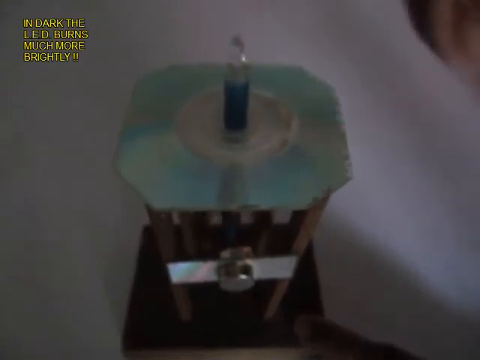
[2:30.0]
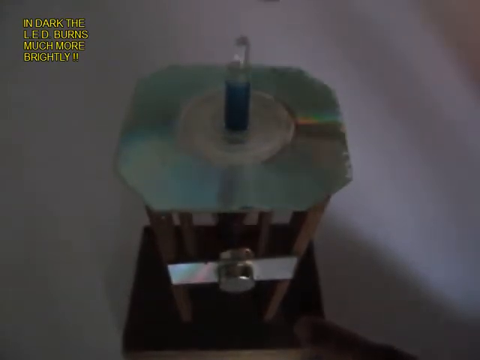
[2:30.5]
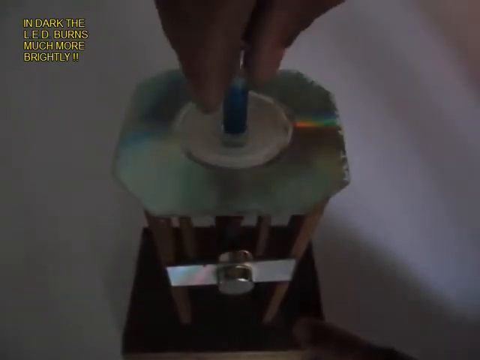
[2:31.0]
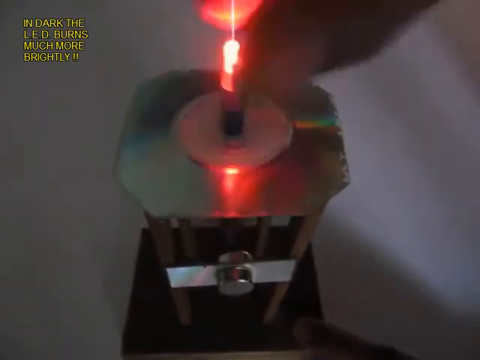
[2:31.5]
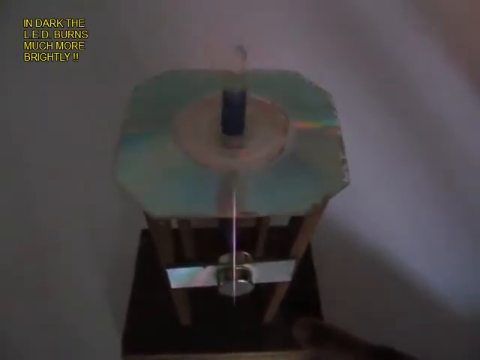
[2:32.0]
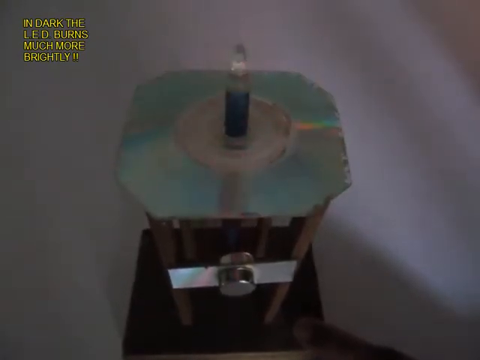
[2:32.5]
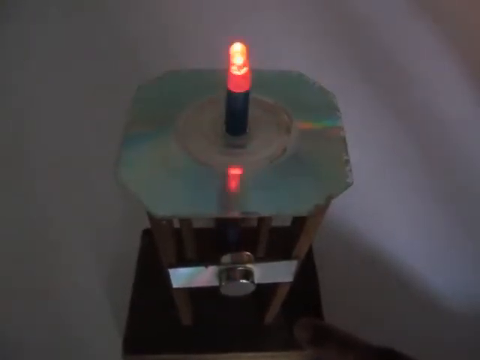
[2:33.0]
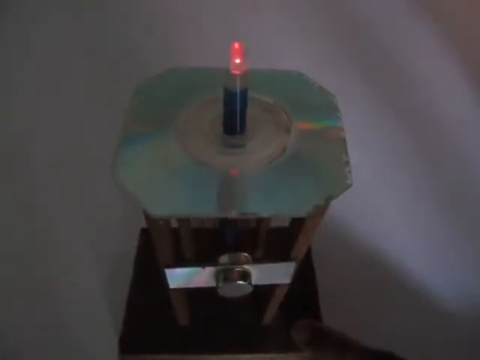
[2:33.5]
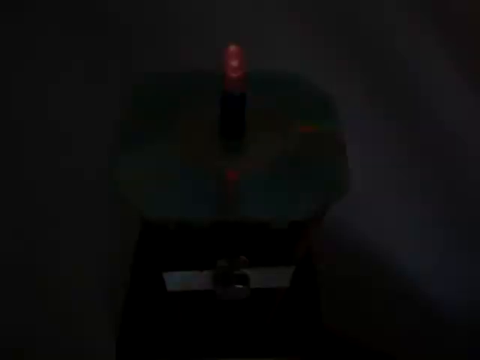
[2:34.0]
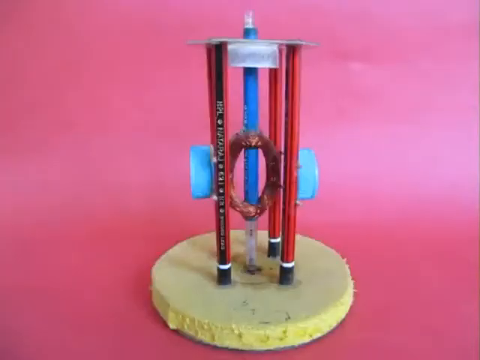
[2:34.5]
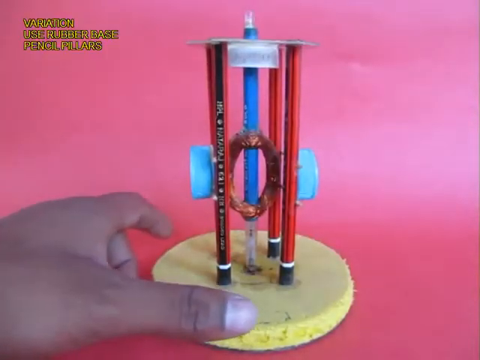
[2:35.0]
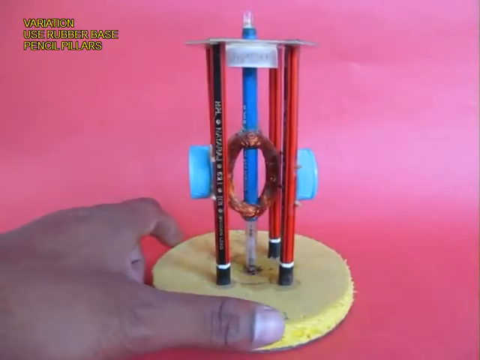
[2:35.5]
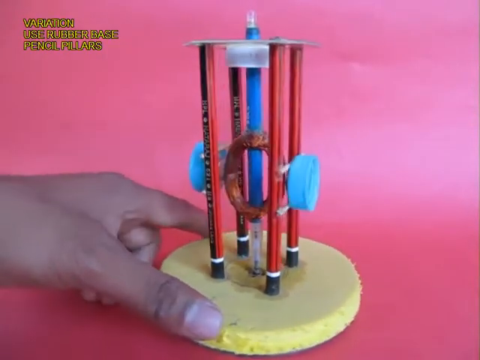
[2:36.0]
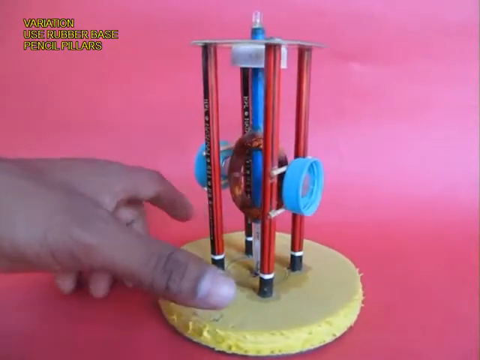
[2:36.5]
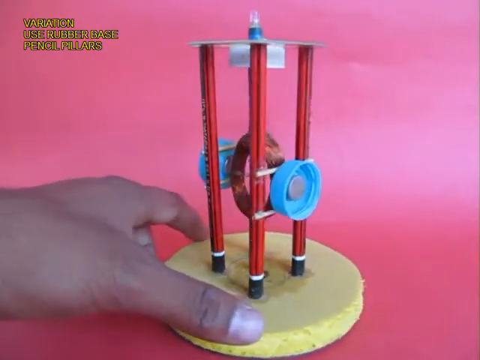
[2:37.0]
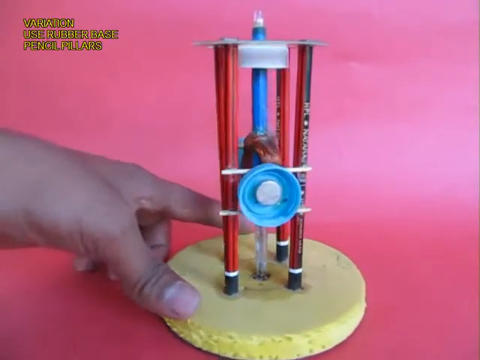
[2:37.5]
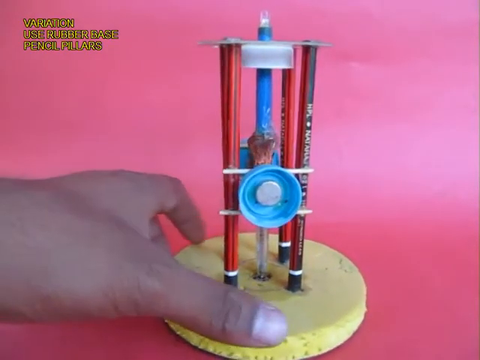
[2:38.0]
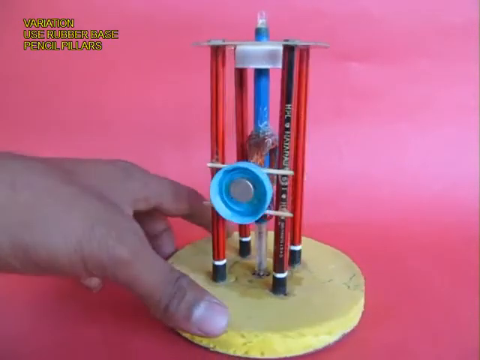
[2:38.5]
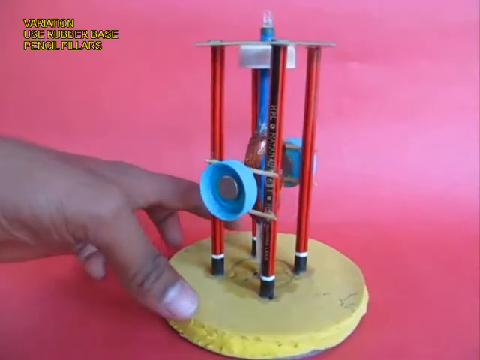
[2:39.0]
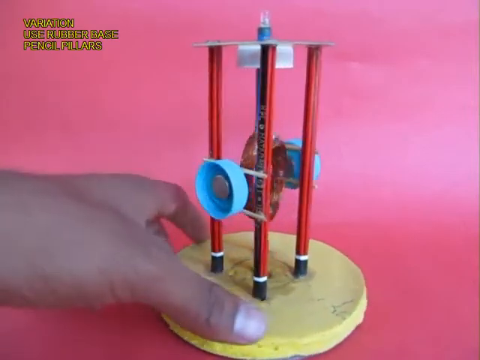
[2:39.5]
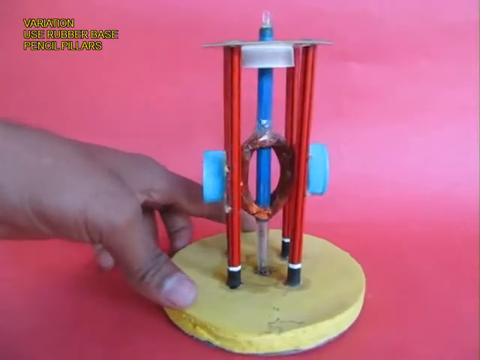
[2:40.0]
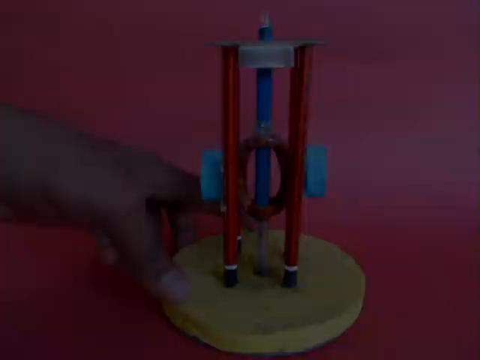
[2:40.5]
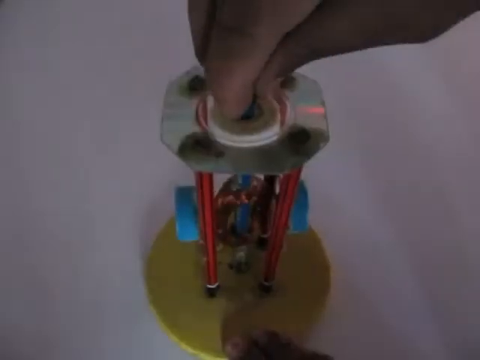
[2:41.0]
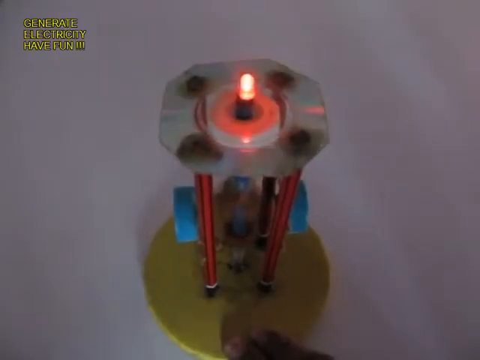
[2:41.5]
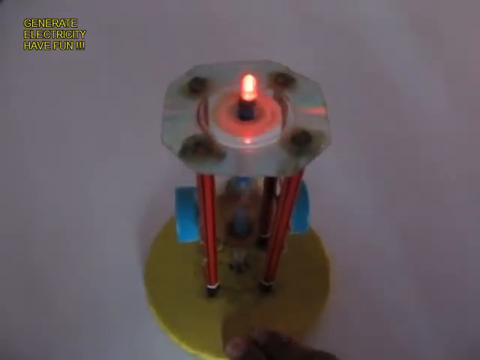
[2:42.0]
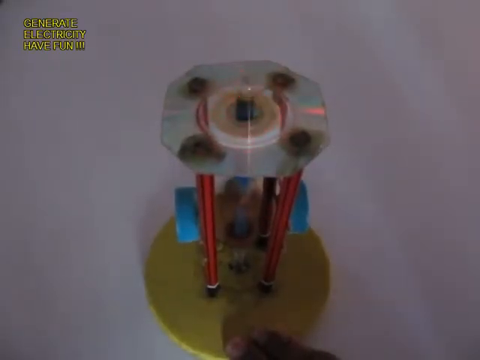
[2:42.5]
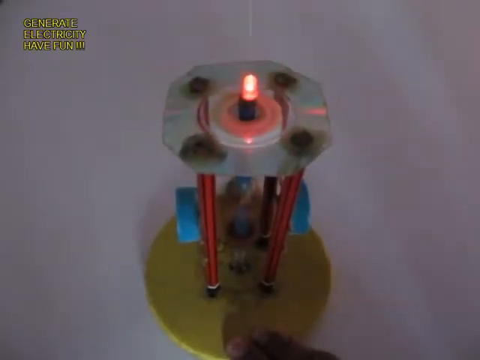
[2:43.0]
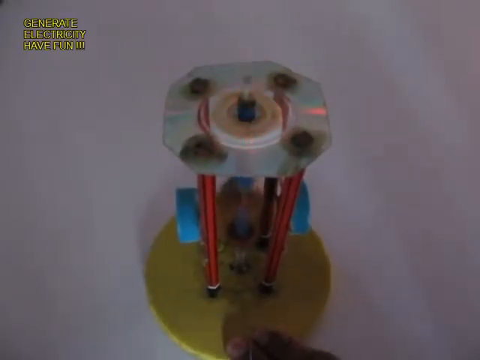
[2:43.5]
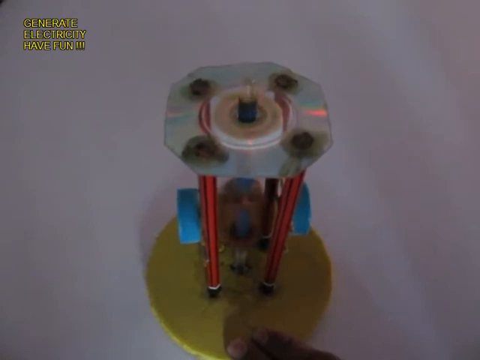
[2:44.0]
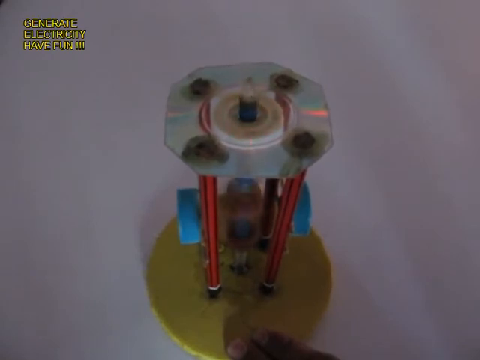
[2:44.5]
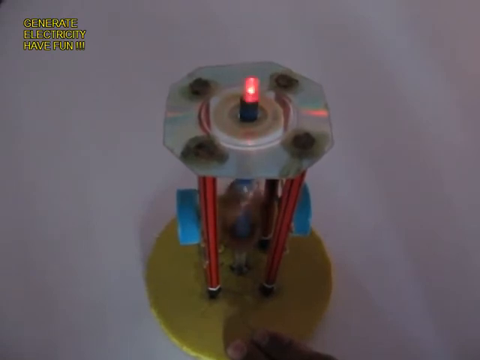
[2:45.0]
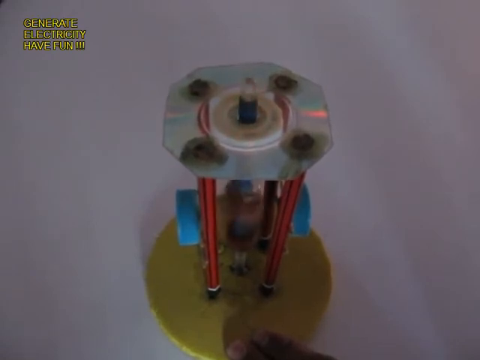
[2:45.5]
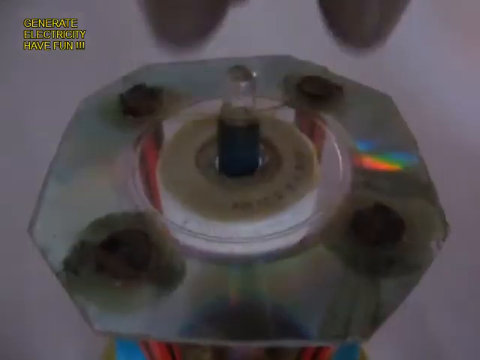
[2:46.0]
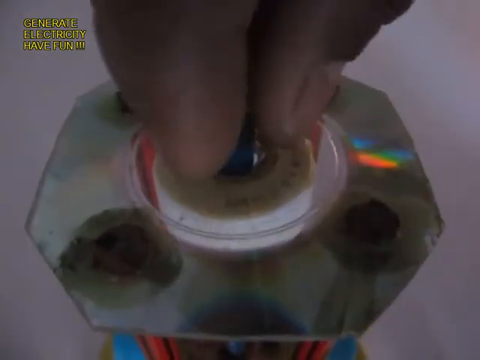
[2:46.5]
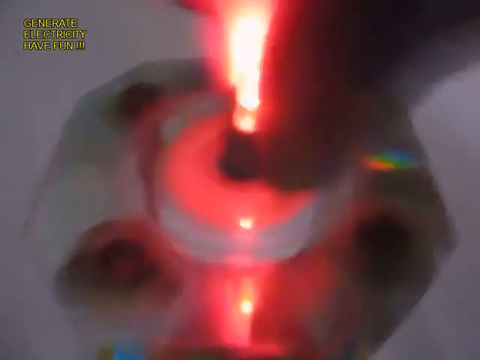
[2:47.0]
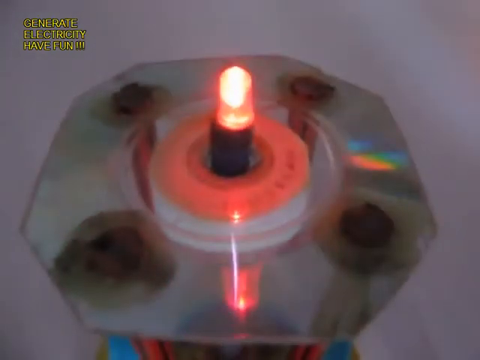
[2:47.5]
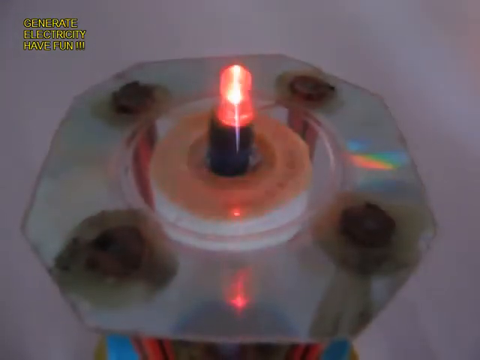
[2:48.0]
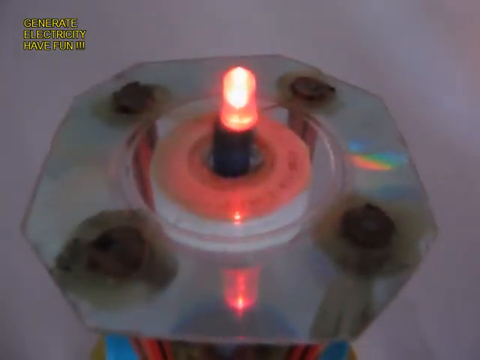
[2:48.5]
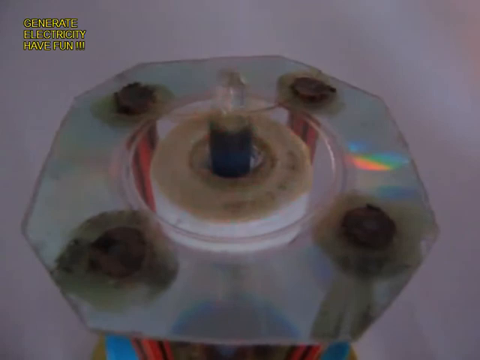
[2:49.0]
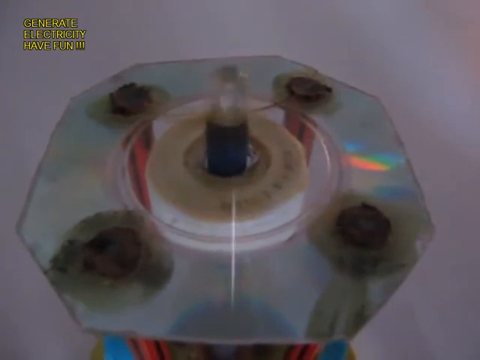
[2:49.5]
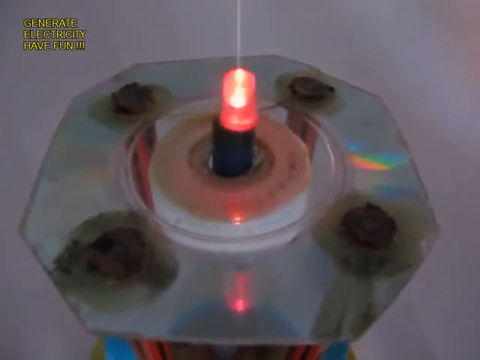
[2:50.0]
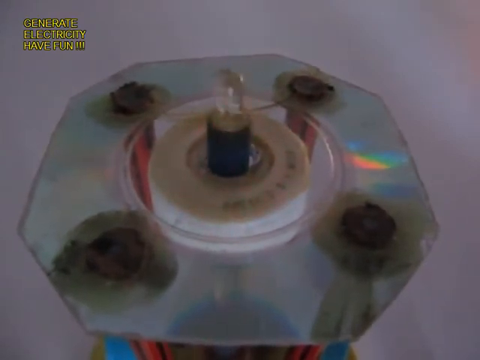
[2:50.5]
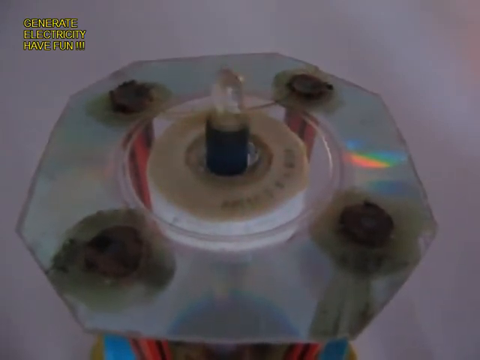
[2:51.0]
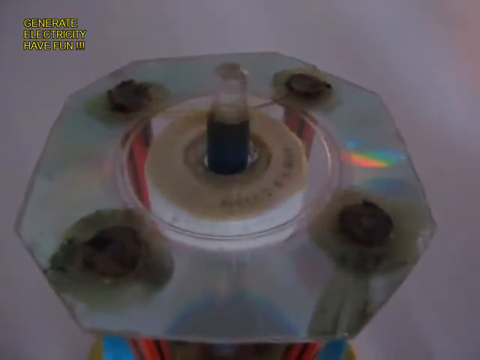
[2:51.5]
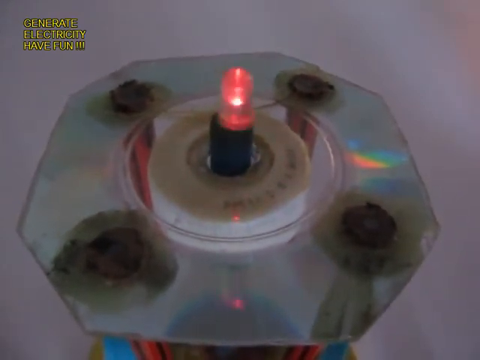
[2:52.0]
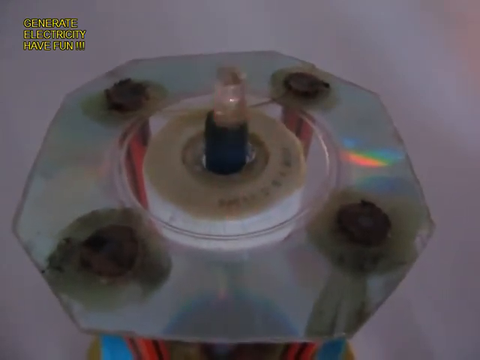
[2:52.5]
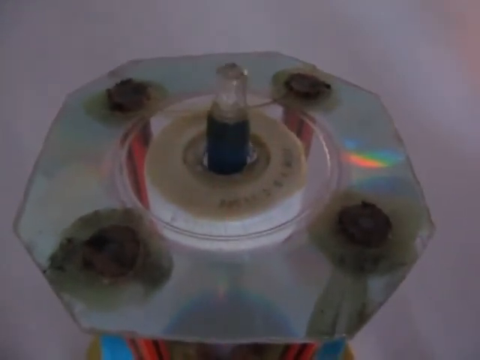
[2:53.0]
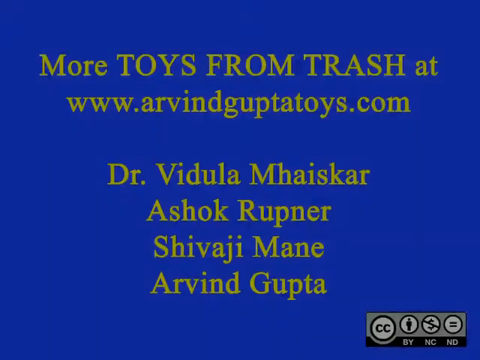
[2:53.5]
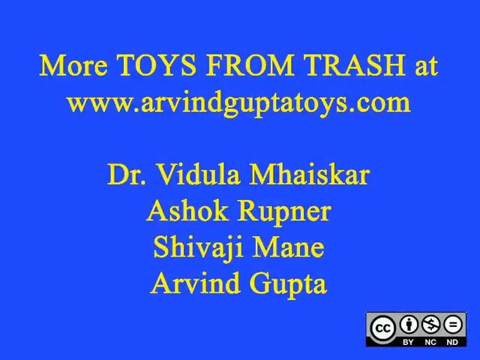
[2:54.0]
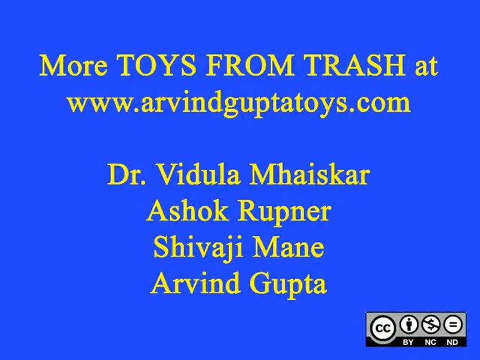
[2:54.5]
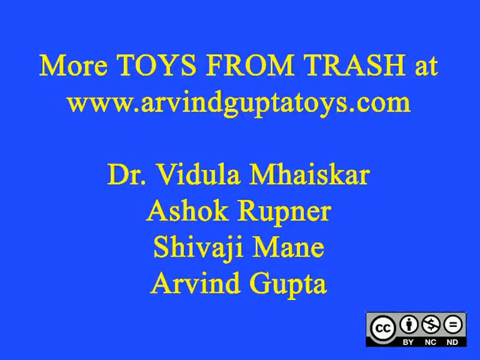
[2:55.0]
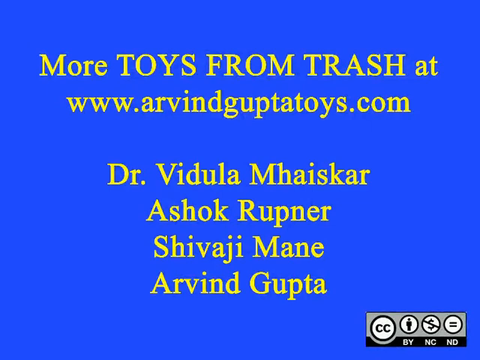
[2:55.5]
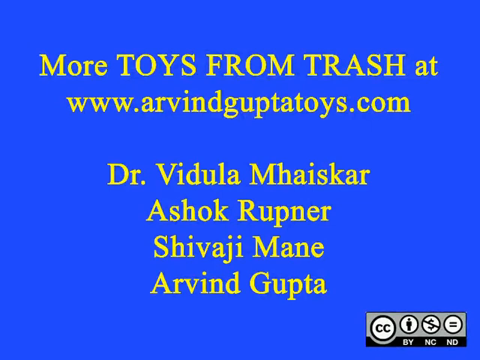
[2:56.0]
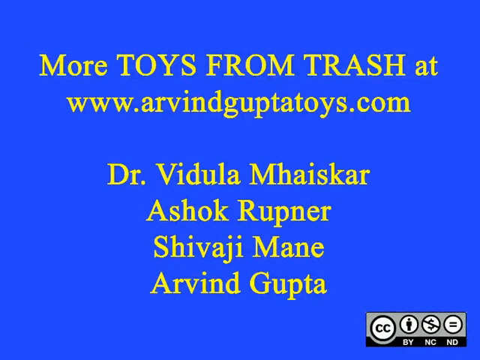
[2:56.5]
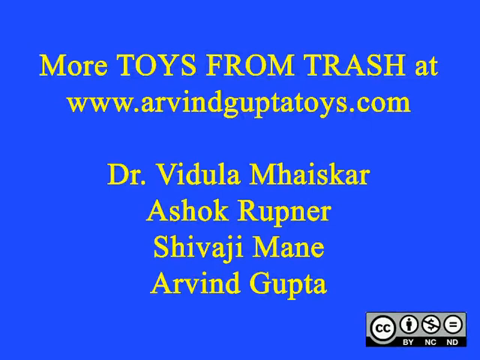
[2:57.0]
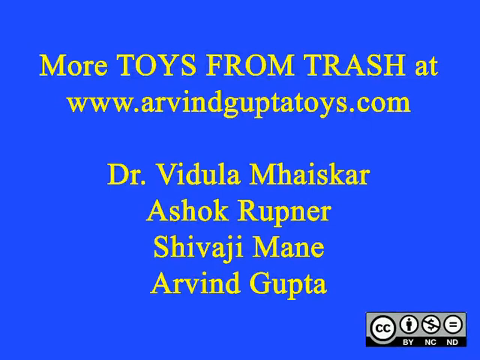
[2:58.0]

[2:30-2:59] The ball pen keeps spinning as the right hand comes into frame twisting its top so it continues to spin very fast, while the LED light blinks red as it spins clockwise. The scene returns to the red table, showing a similar variation of the wooden stand that has a rubber base and pencils as pillars instead of wooden pillars; the left hand turns it clockwise to show the whole structure. It then appears in the dark on a white table, where the LED light turns on; the pencil twists and spins fast as the LED light flashes red. In another shot, the right hand twists the top of the pencil where the LED light is, and it keeps spinning very fast as the light turns on. The video ends with a screen in yellow lettering on a royal blue background that says "more toys from Trash at www.arvindguptatoys.com Dr. Vidula, Mahiaskar, Ashok, Rupner, Shivaji, Main, Arvind, Gupta".